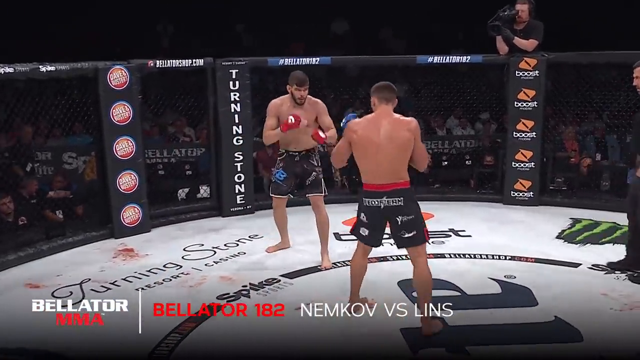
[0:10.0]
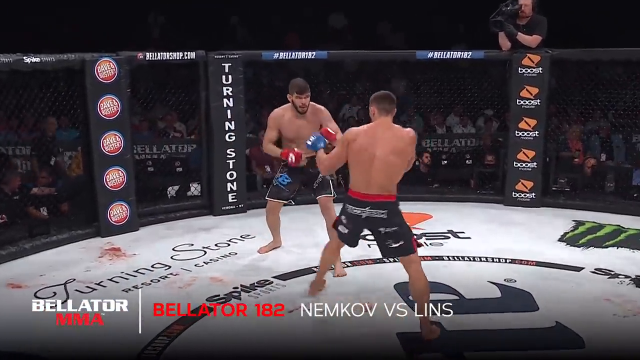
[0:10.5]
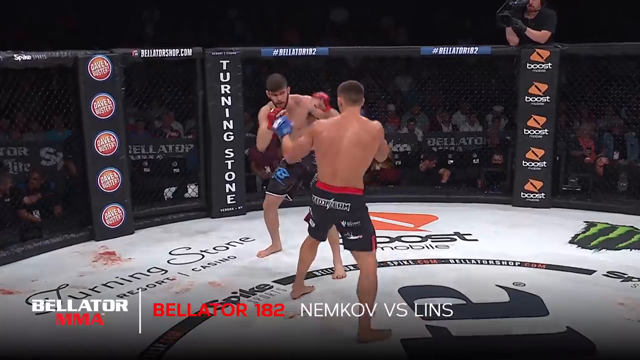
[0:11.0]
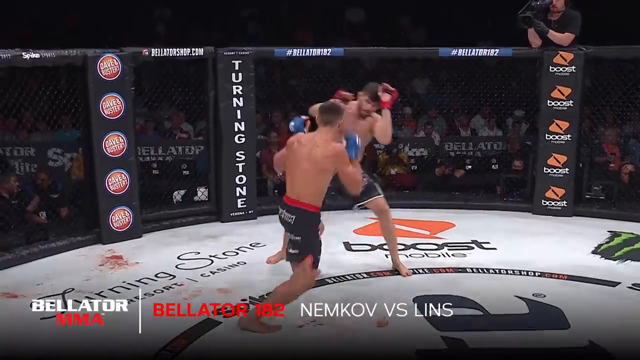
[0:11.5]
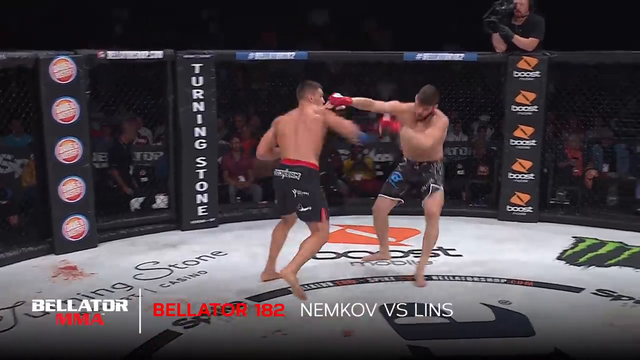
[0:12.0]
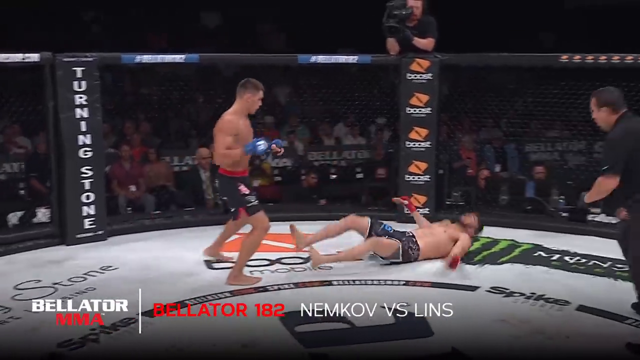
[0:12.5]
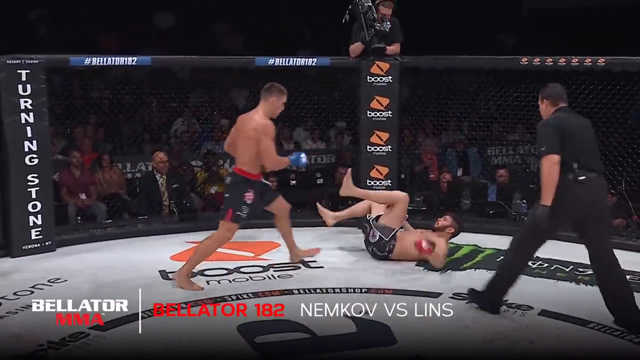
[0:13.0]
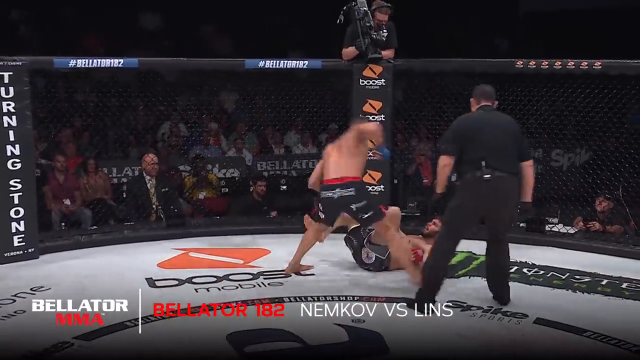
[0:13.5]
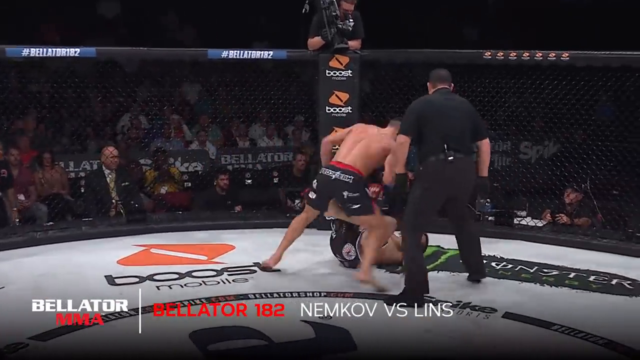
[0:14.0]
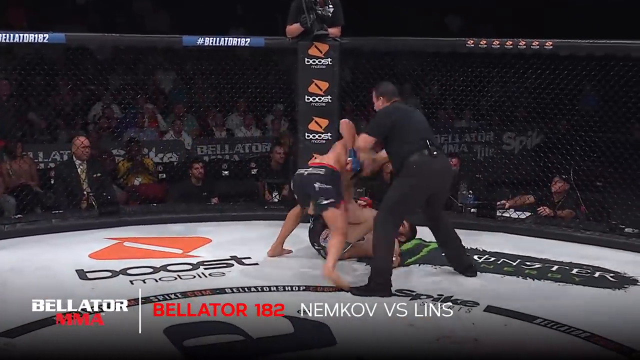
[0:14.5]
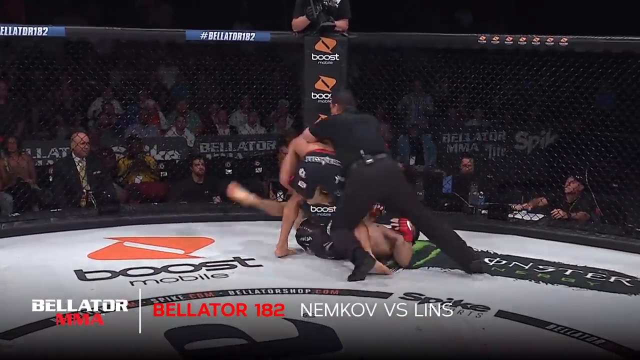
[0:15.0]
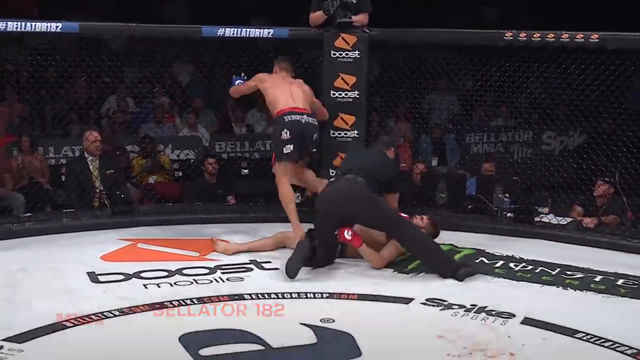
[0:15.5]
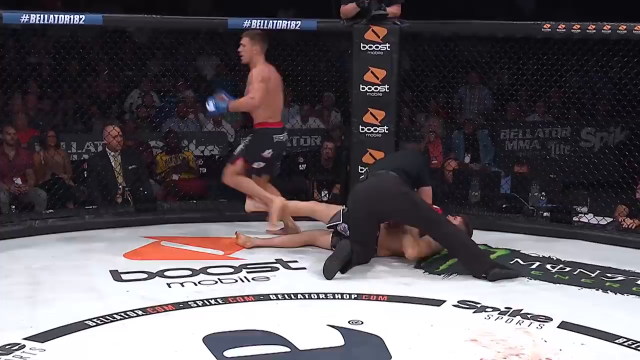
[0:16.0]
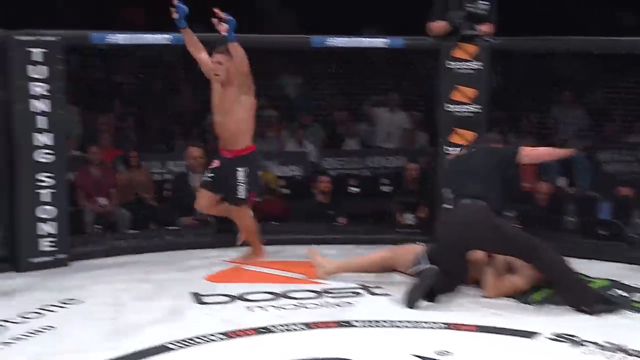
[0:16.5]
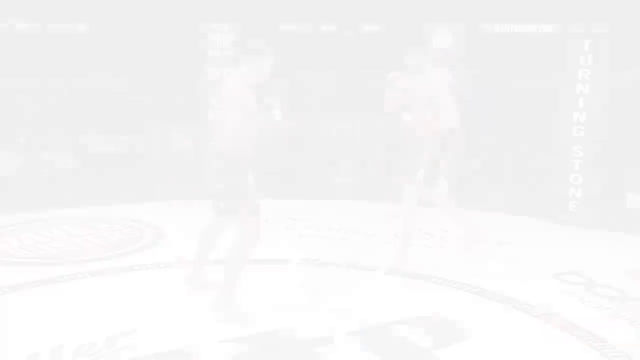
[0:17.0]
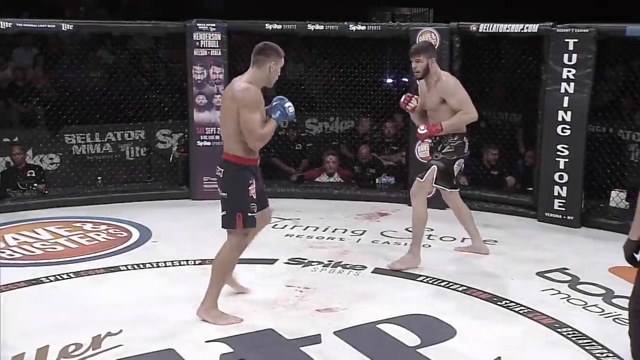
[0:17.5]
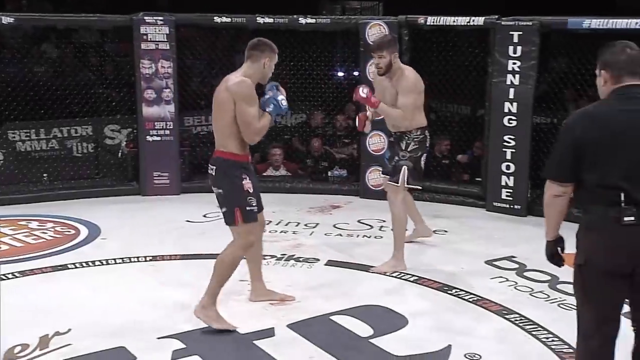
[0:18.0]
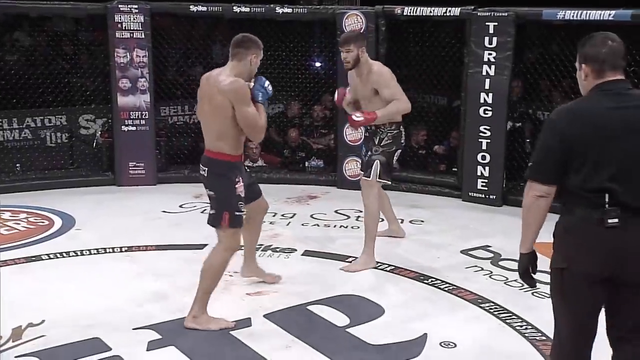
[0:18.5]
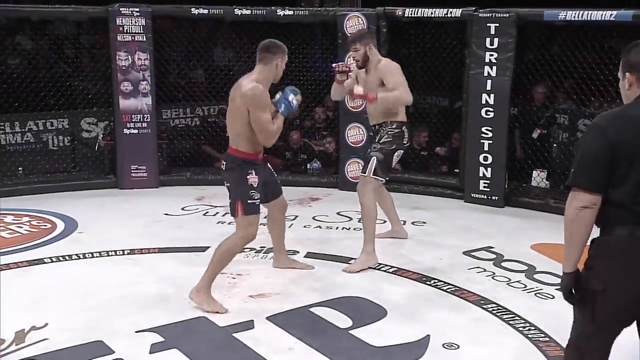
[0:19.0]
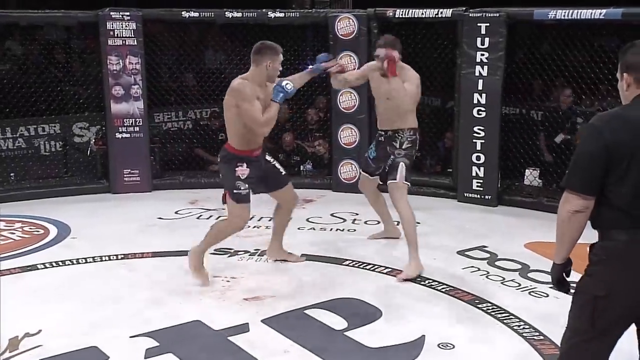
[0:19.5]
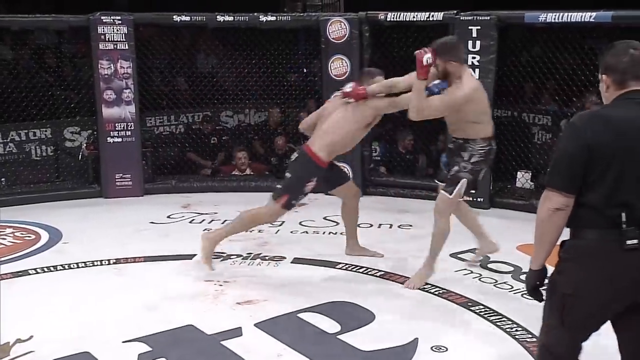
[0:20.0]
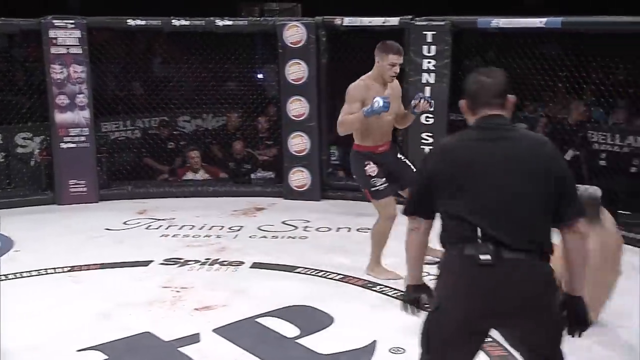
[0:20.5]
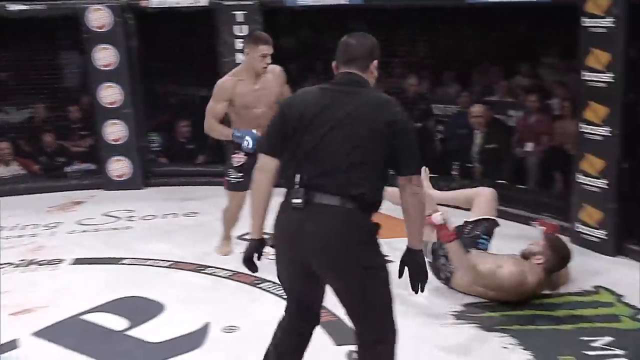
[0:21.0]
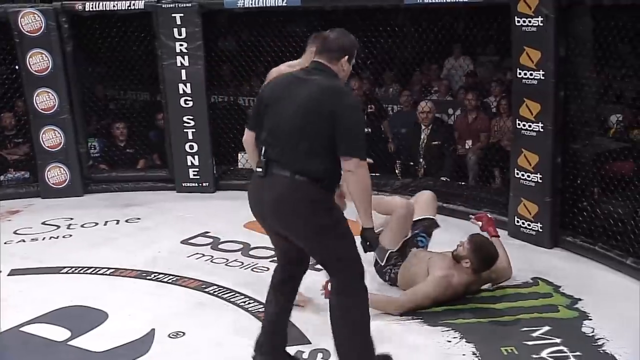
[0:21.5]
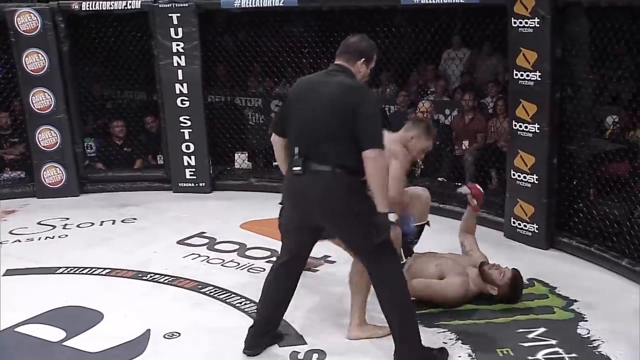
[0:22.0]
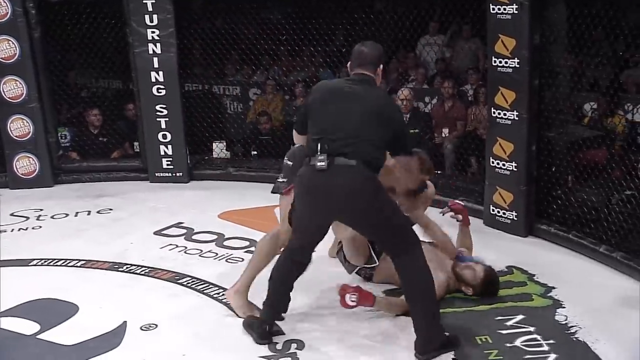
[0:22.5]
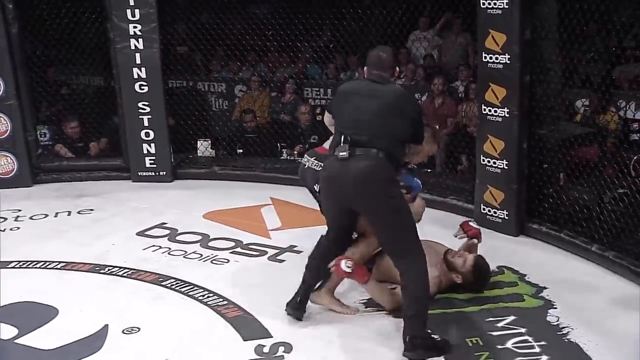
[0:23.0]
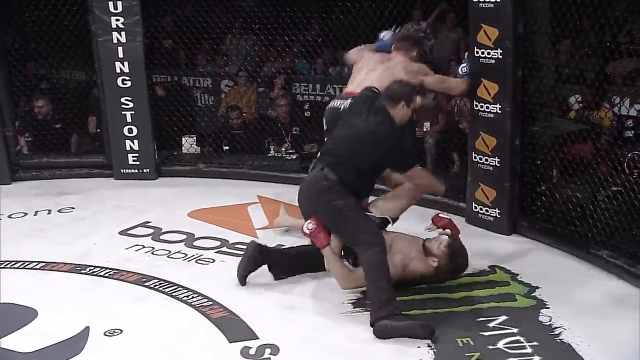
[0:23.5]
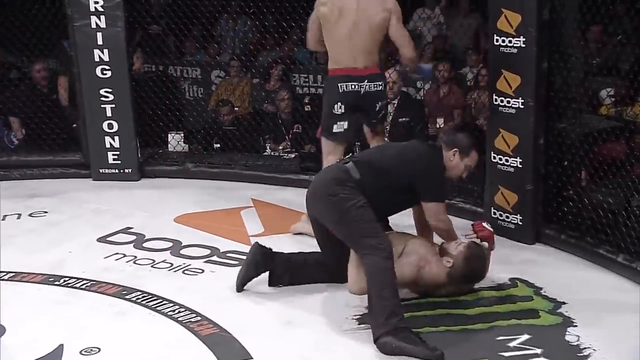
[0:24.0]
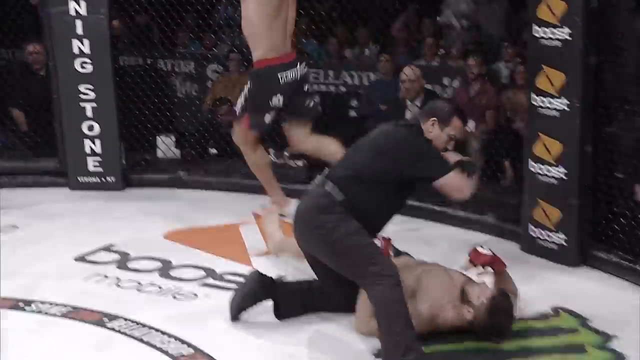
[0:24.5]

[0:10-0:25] The fighter lands a right hook, knocking his opponent down, and then strikes him twice while he is down. A replay shows him landing the right again. After the opponent is knocked down and hit twice, the referee jumps in front of the fighter, blocks him with his body and puts his hands up, calling the match. The whole fight is extremely fast: a couple of kicks, one right straight, a knockdown and two hits to the face before the referee stops it.